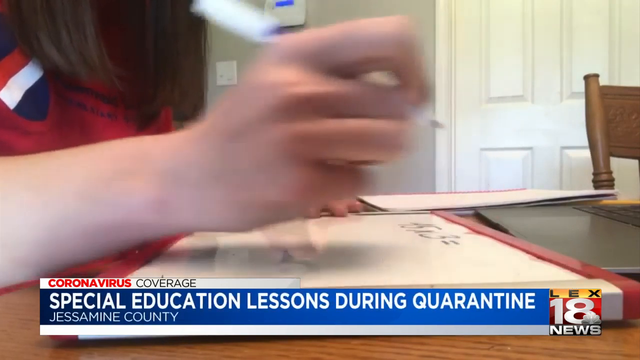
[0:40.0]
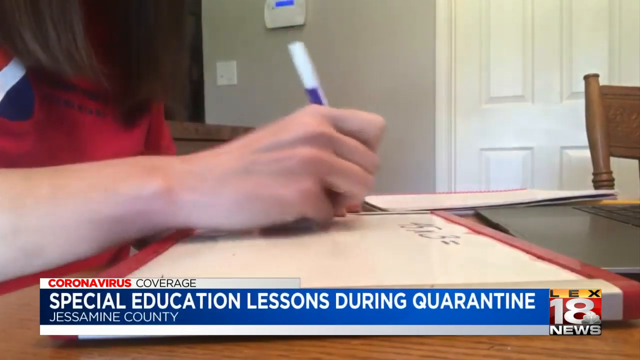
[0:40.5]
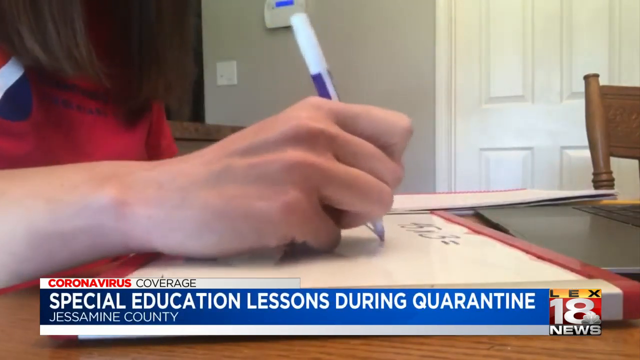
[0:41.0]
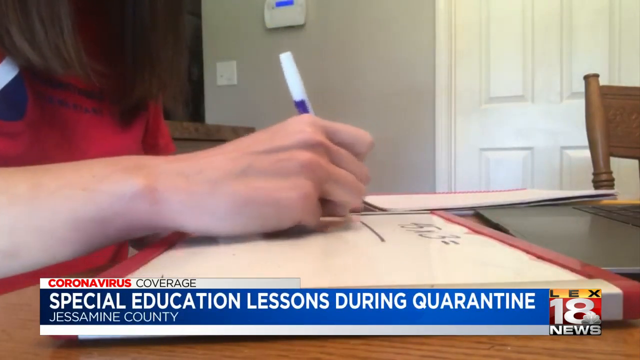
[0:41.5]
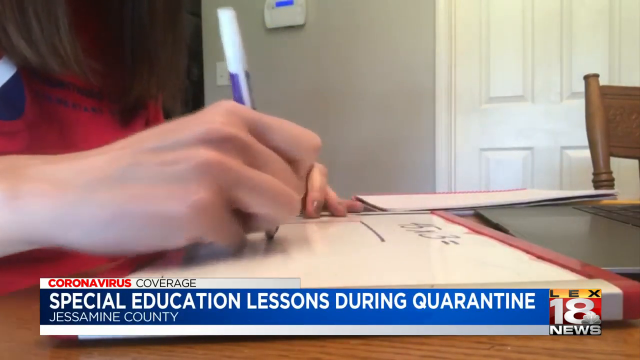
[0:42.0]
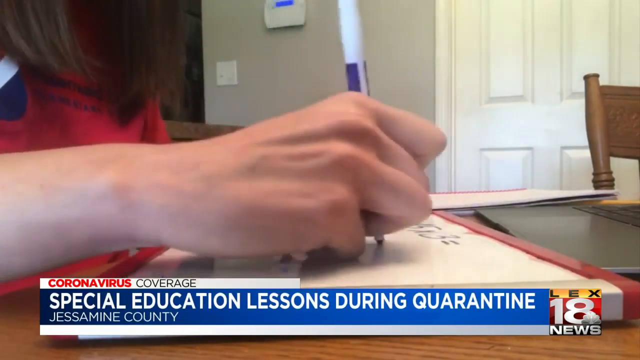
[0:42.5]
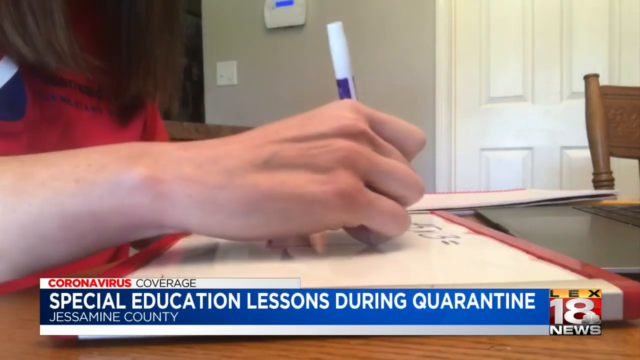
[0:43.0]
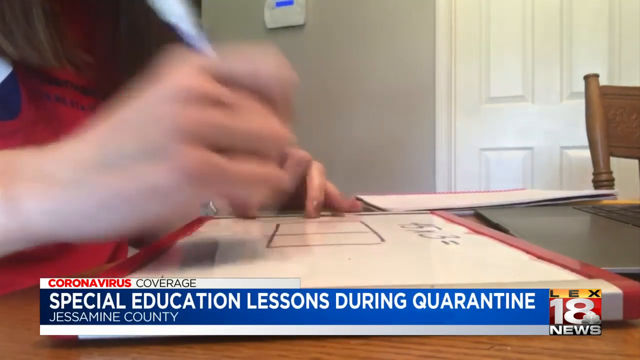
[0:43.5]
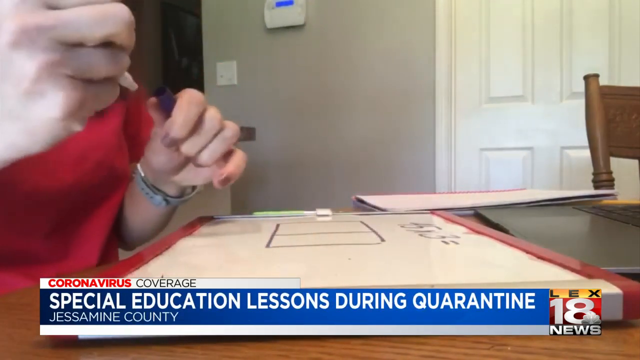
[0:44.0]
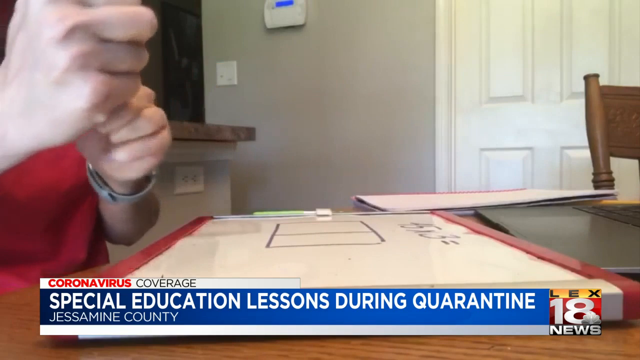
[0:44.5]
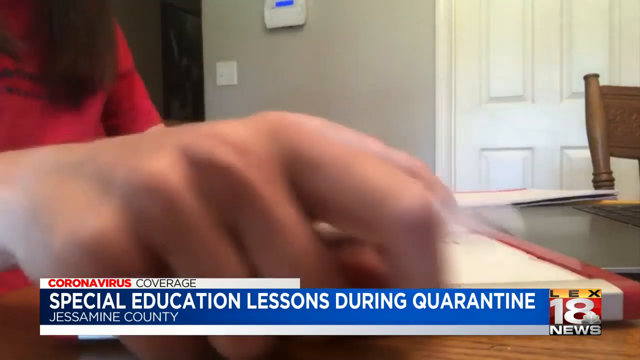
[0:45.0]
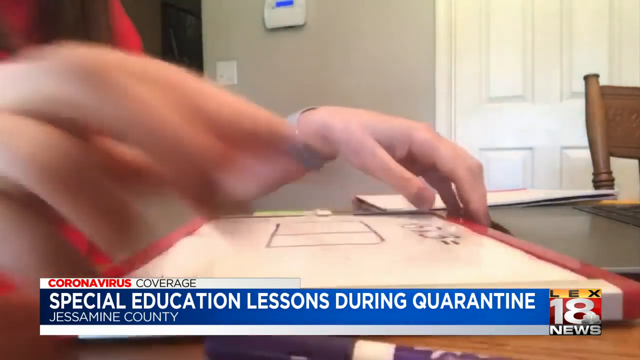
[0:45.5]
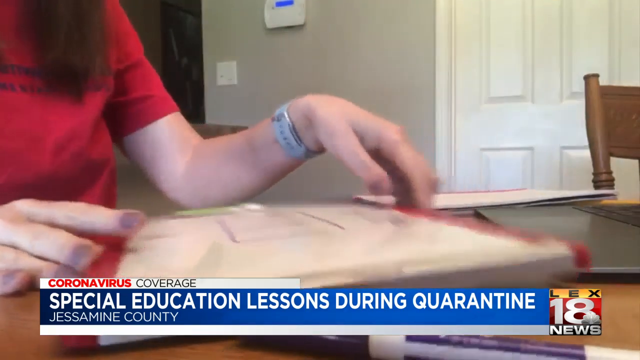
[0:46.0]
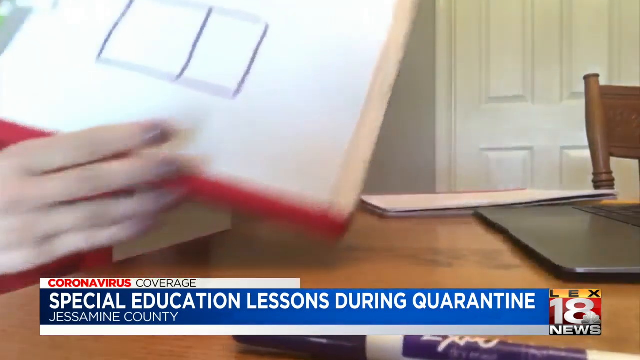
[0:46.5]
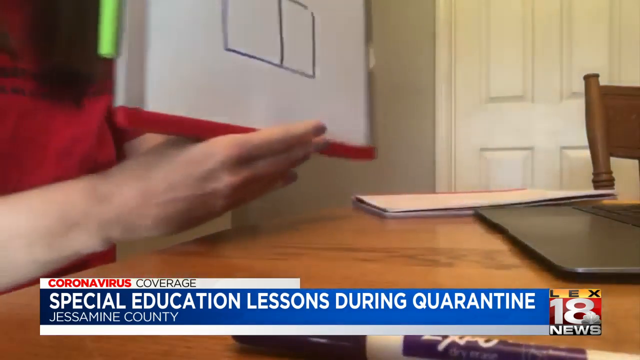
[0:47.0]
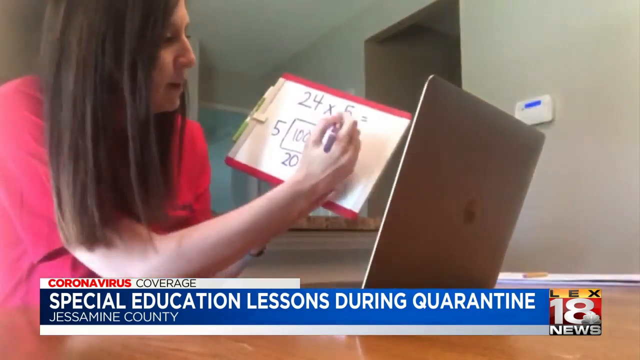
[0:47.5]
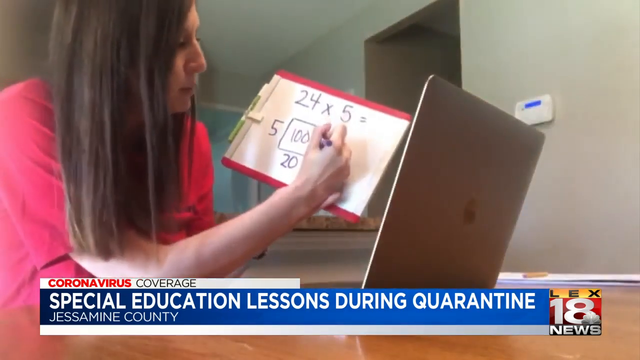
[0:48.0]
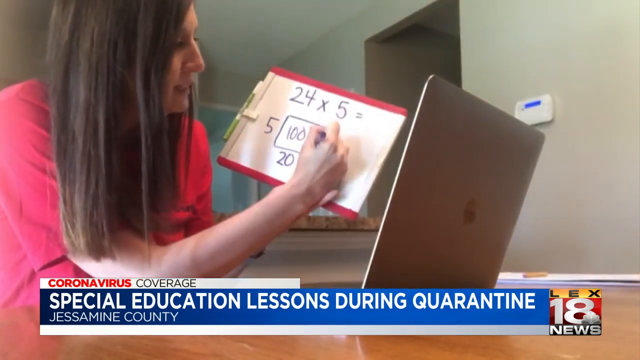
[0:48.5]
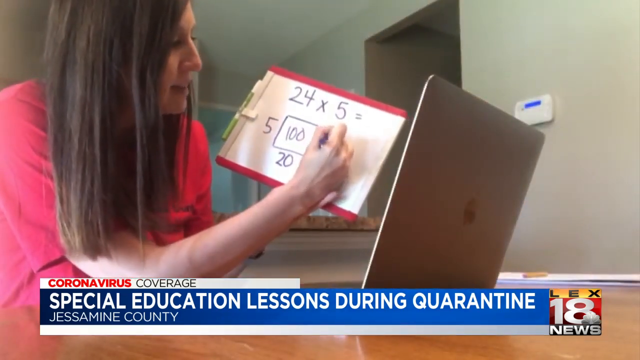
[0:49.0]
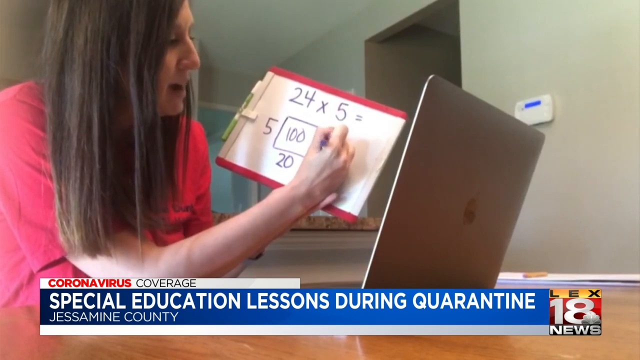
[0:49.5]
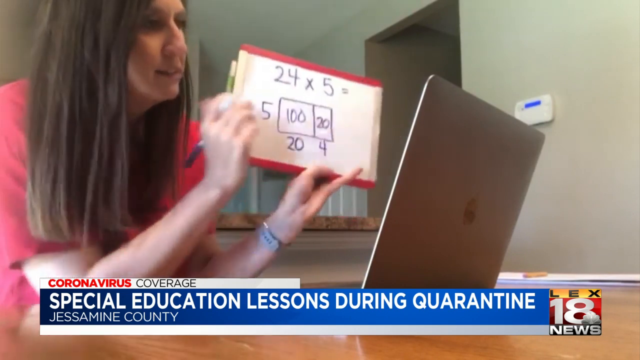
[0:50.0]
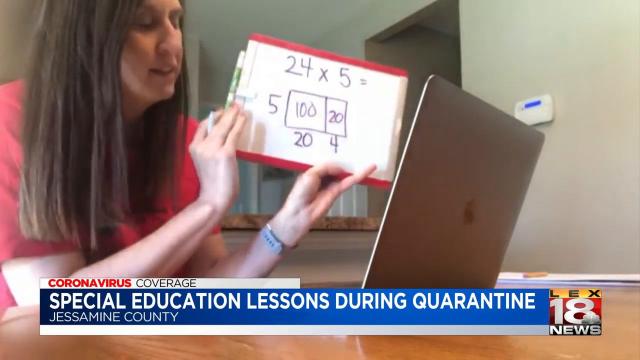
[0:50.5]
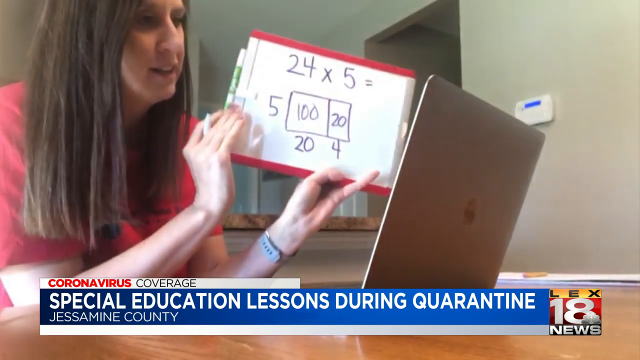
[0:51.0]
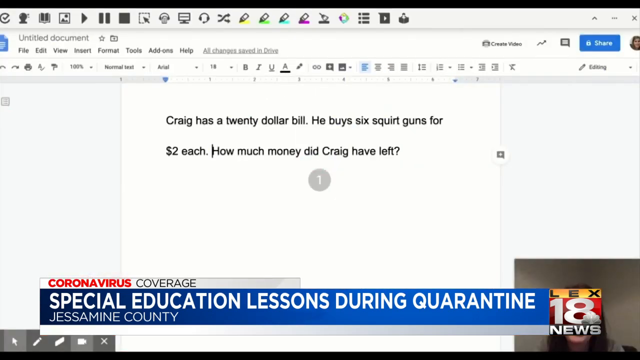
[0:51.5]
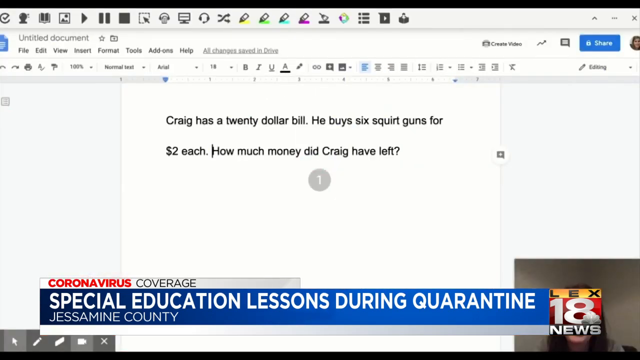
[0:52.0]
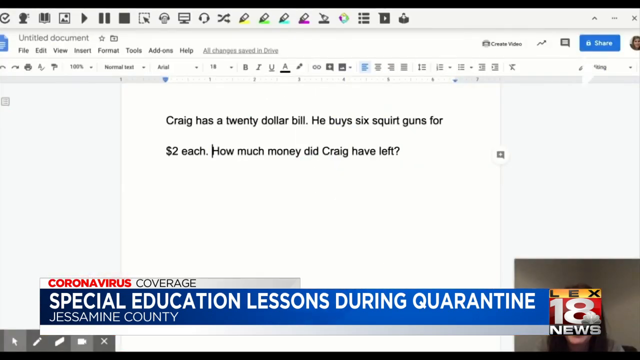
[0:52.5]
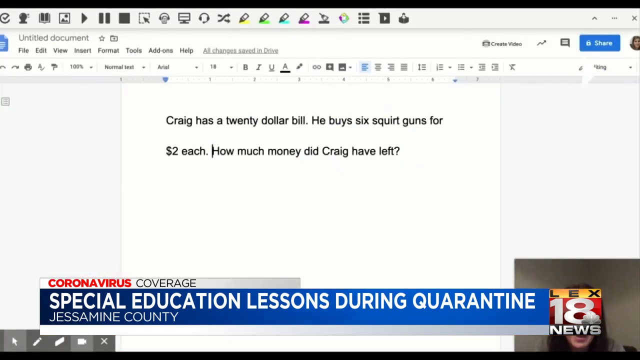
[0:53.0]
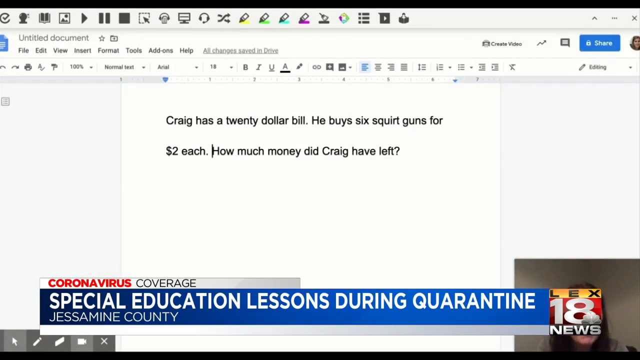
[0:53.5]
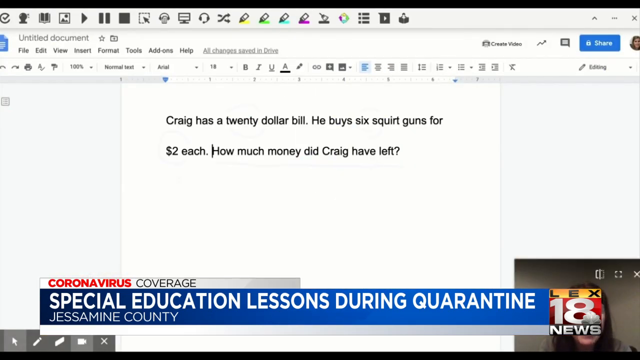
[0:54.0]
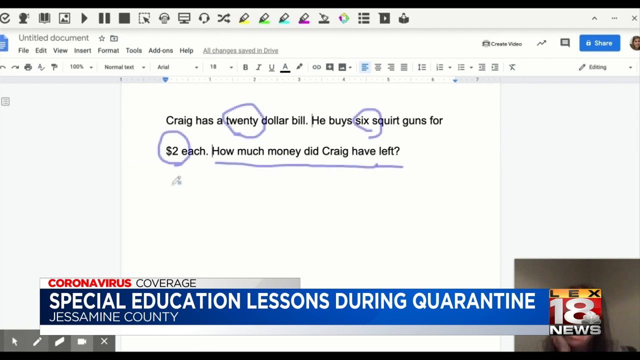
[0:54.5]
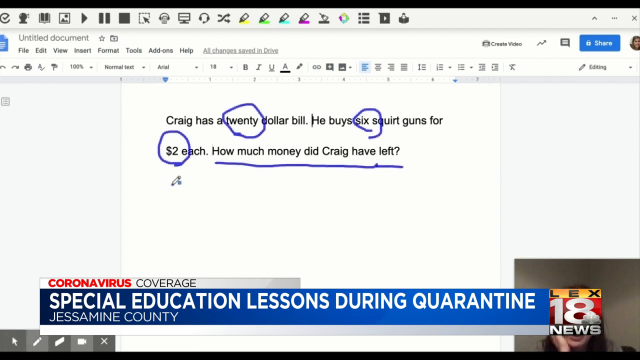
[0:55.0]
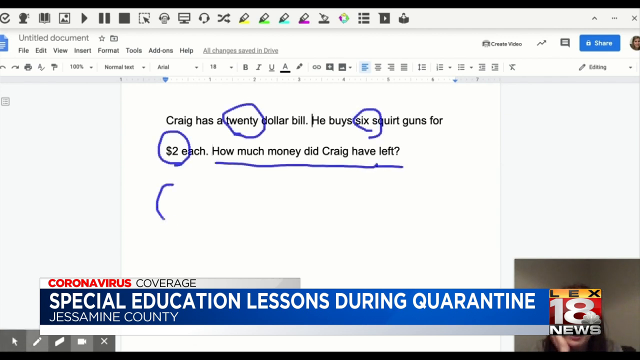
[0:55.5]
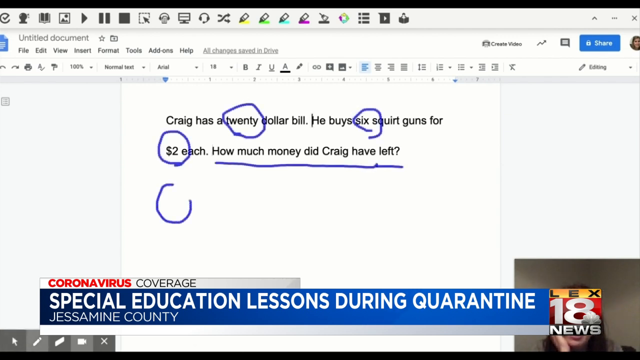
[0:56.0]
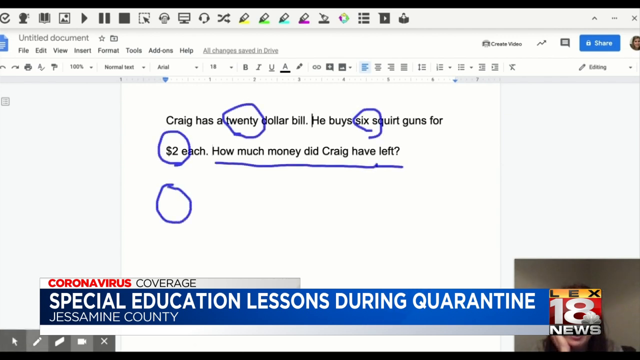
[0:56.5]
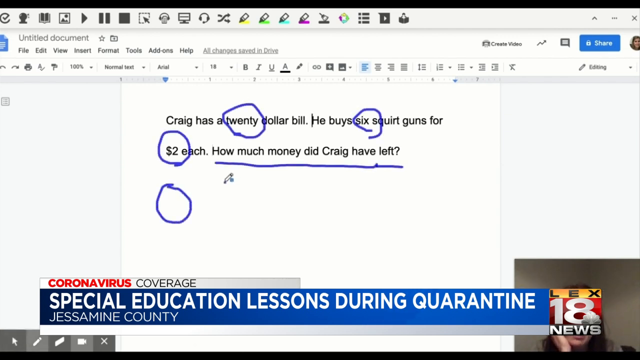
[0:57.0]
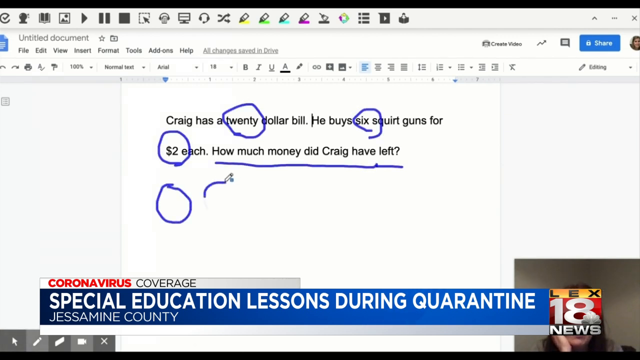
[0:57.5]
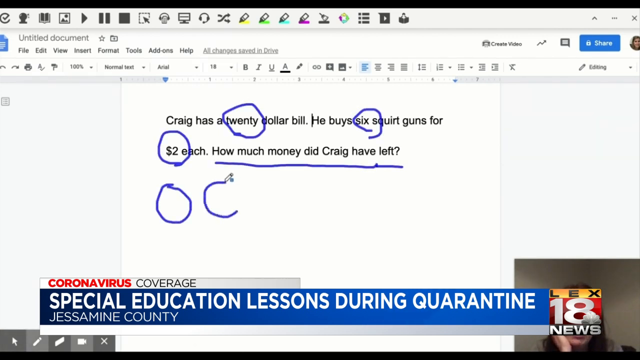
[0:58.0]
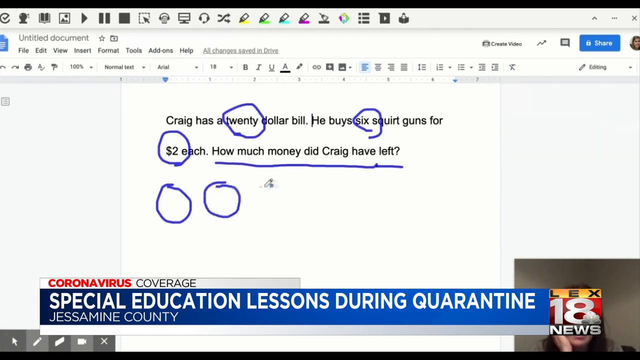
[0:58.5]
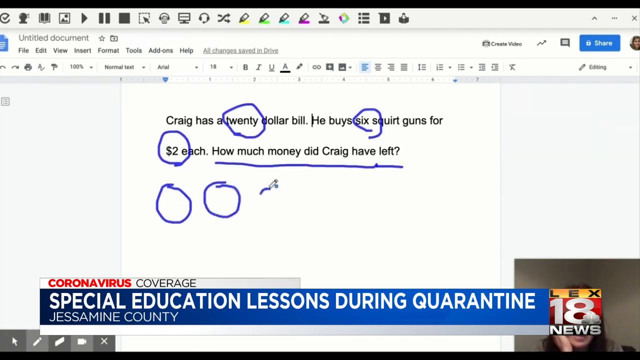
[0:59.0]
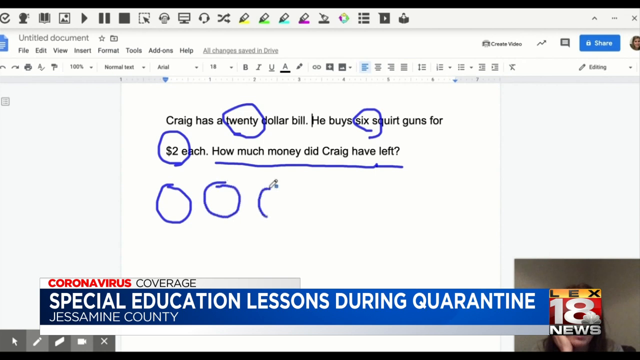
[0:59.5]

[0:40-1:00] A picture of a woman appears, with TV coverage text at the bottom that says "coronavirus coverage, special education lessons during quarantine in Jessamine County"; this is alex18news. A woman holds a marker in her right hand and walks in some kind of room, with a door at the right side. She has one small scoreboard. She draws a line, then creates a rectangle and divides it into two parts, a square and a half rectangle on the right side. She points out that for 24 times 5 on the scoreboard, 5 and 20 are the edges of a square, which equals 100, and 5 times 4 is 20, shown by the half rectangle. Then an untitled document appears that says "Craig has a $20 bill" and "for $2 each, how much money did Craig have left?" The numbers are marked with blue circles.